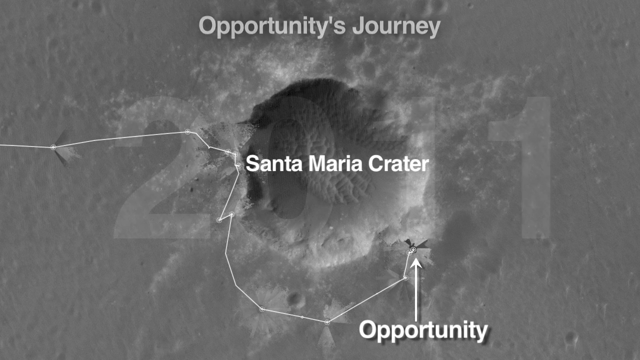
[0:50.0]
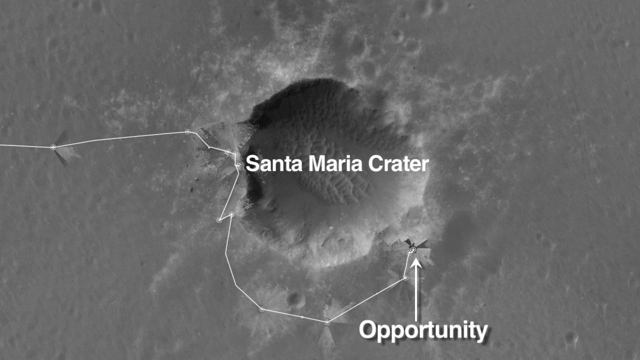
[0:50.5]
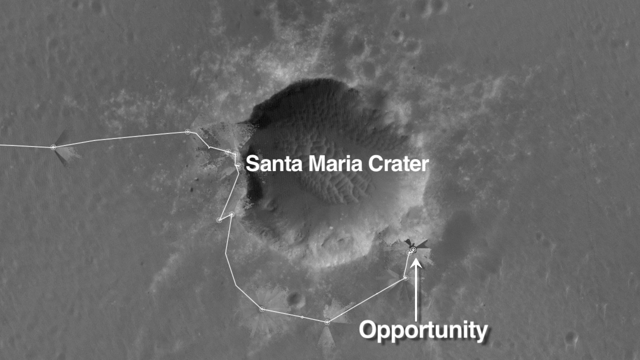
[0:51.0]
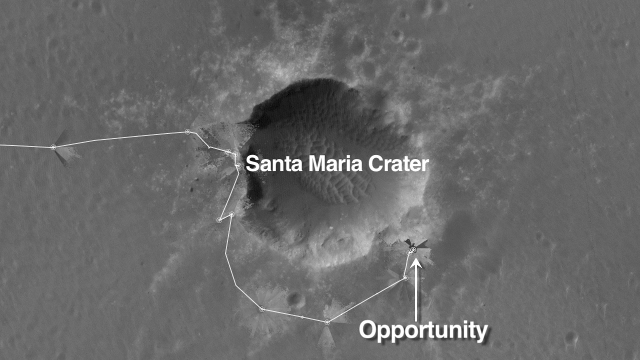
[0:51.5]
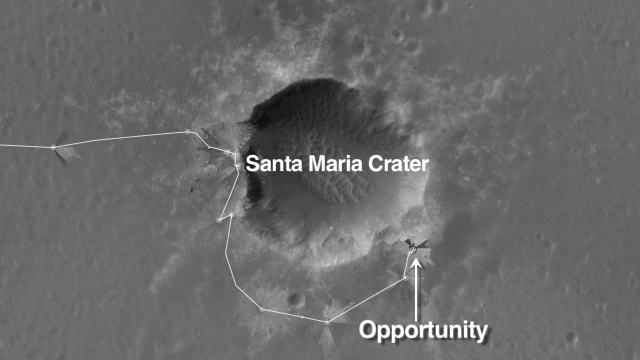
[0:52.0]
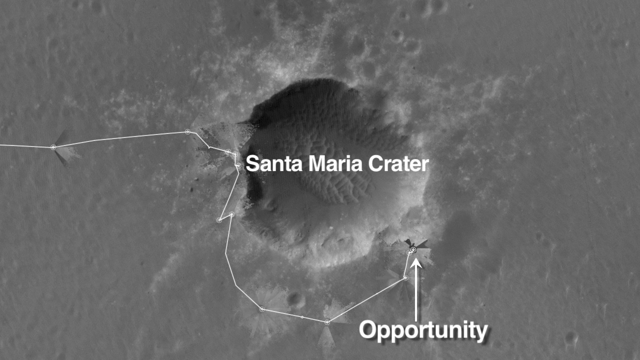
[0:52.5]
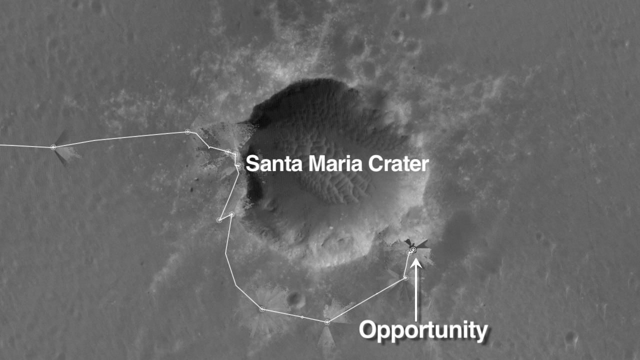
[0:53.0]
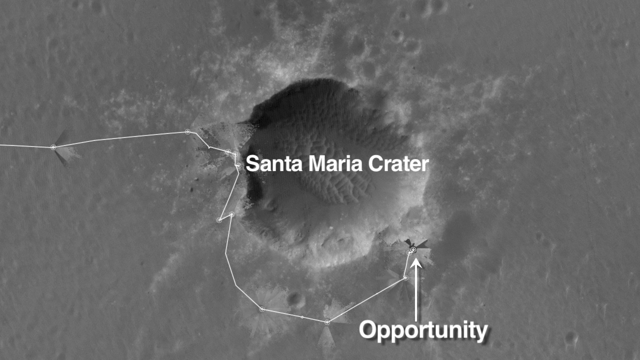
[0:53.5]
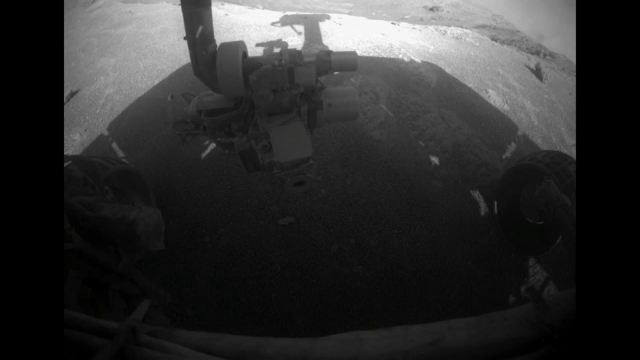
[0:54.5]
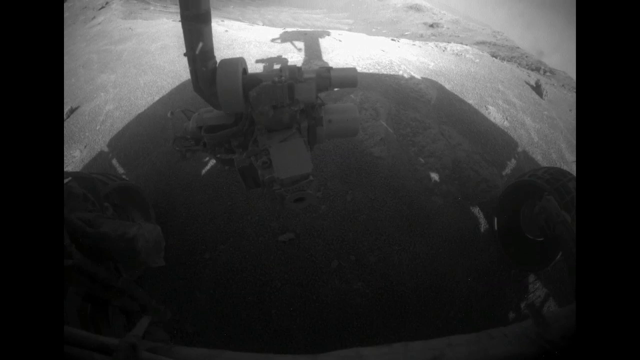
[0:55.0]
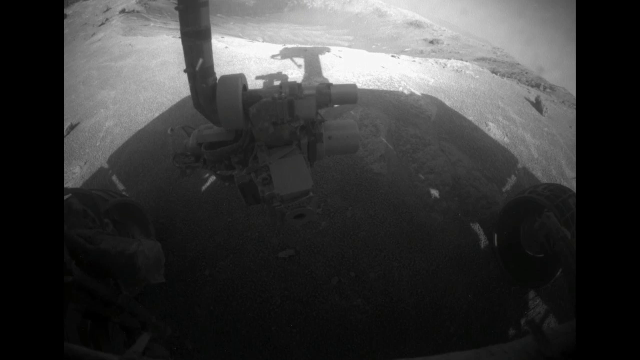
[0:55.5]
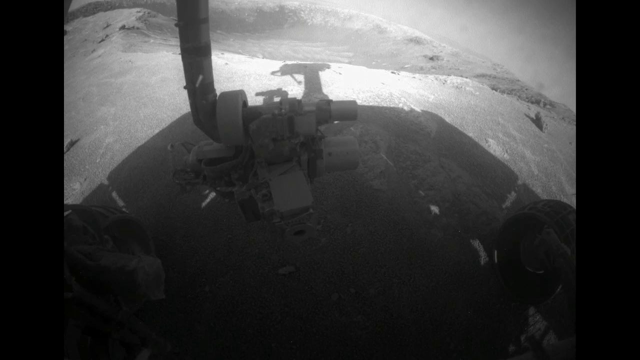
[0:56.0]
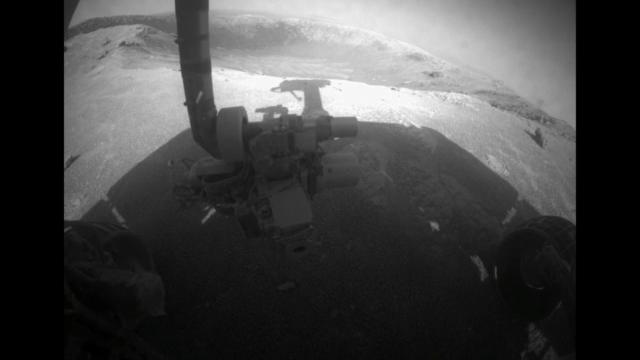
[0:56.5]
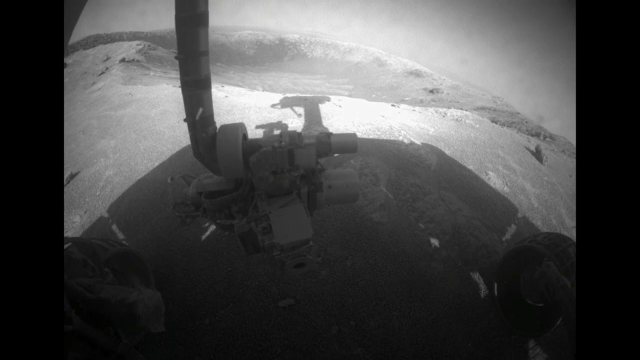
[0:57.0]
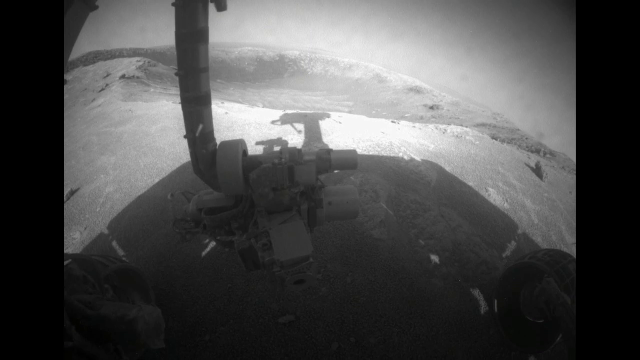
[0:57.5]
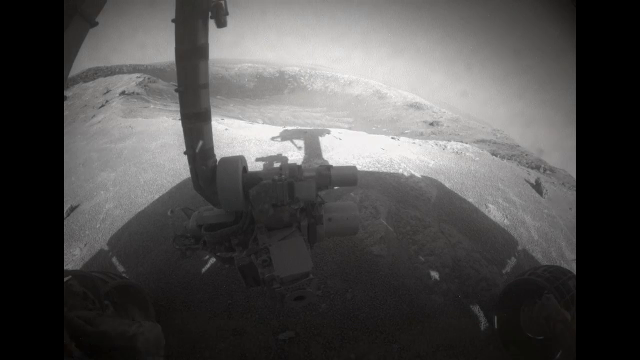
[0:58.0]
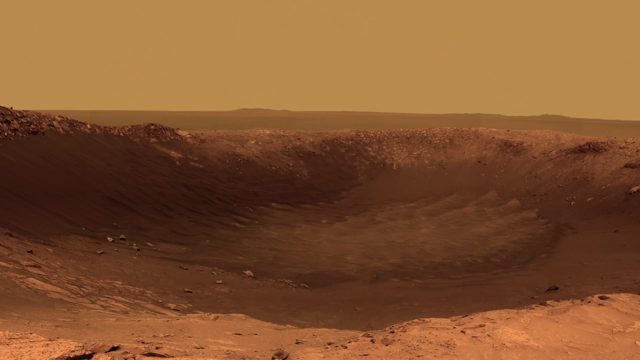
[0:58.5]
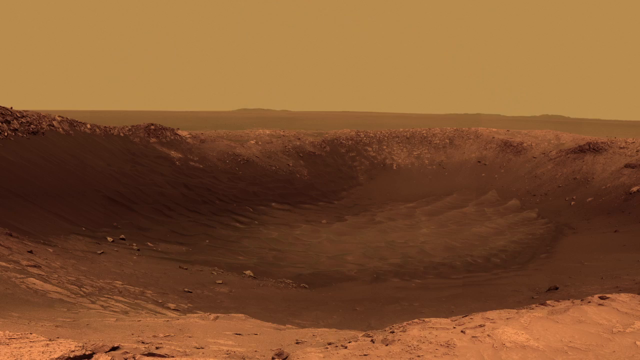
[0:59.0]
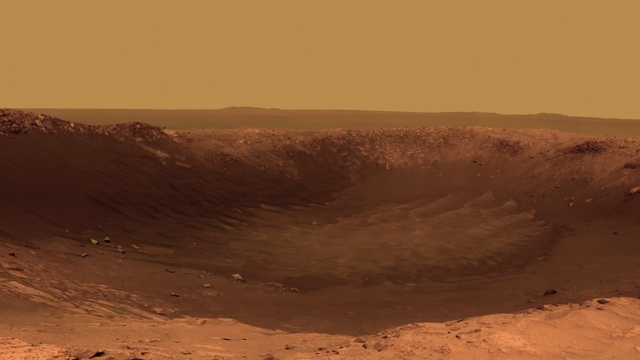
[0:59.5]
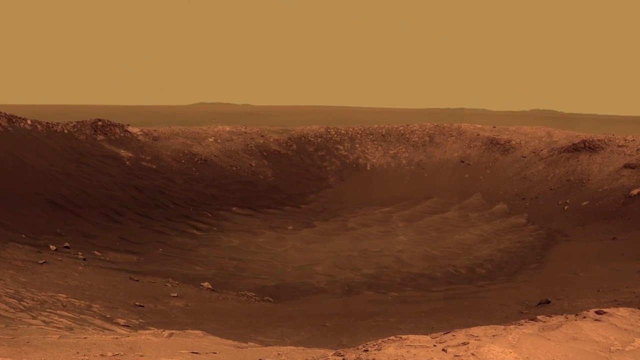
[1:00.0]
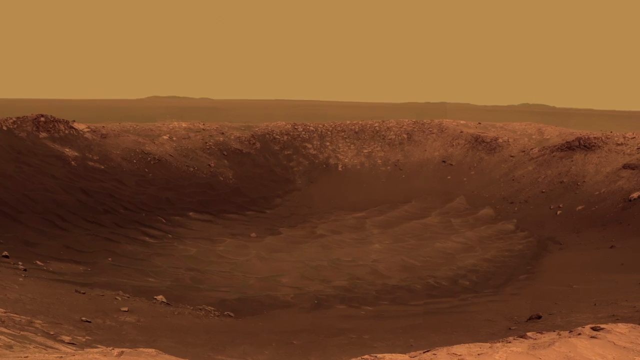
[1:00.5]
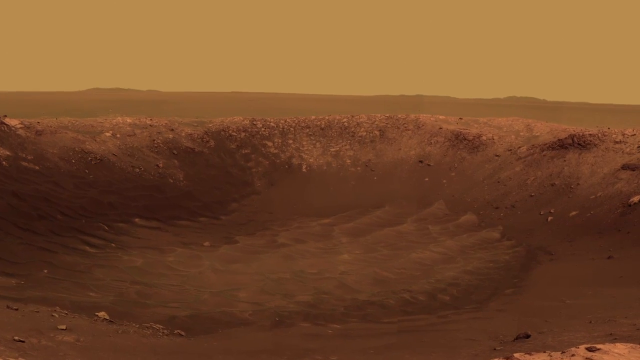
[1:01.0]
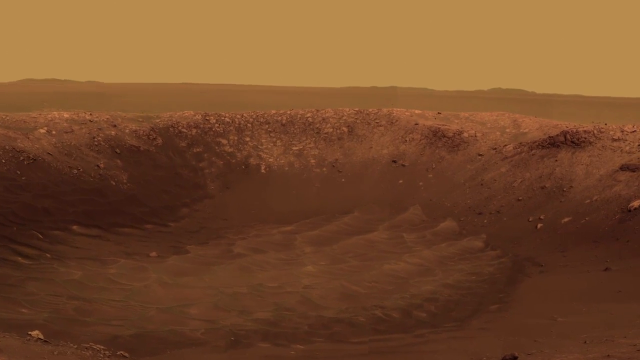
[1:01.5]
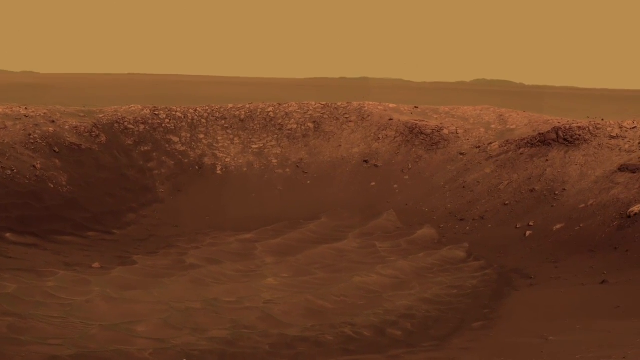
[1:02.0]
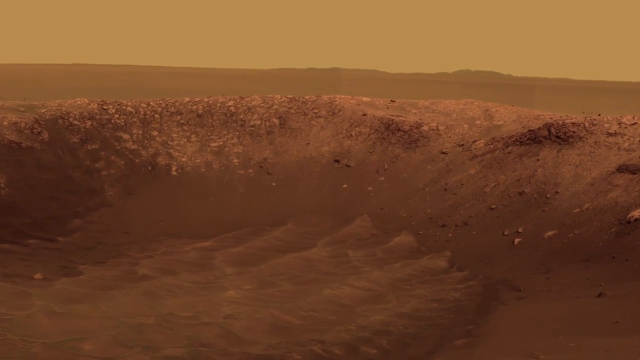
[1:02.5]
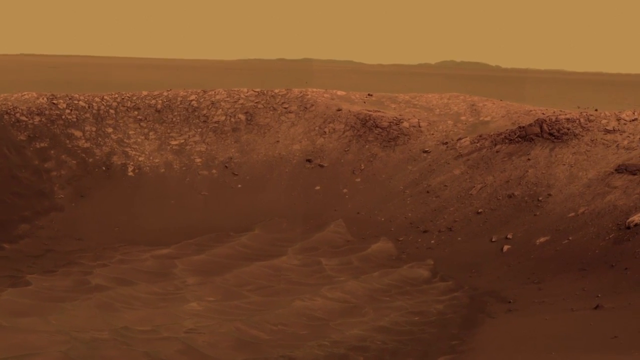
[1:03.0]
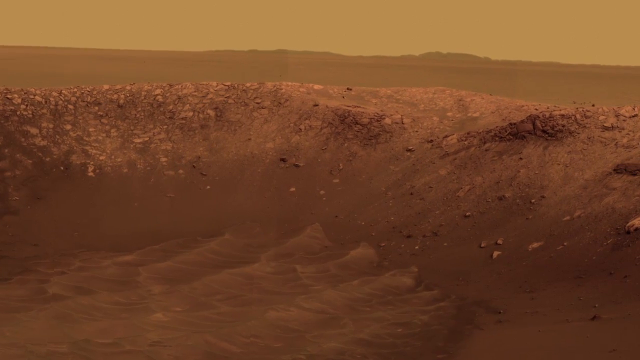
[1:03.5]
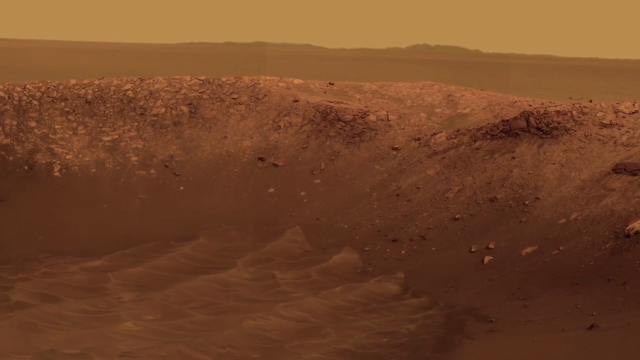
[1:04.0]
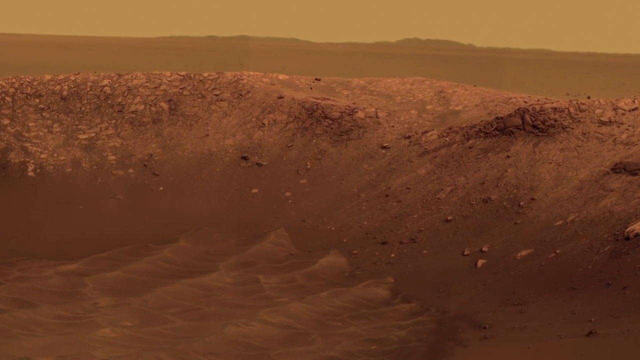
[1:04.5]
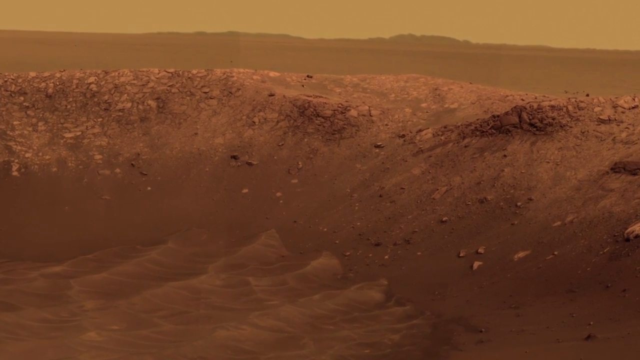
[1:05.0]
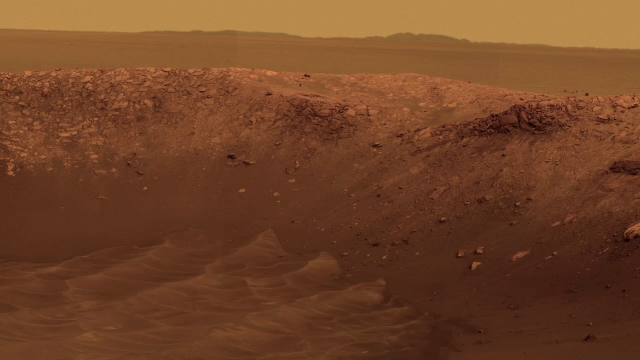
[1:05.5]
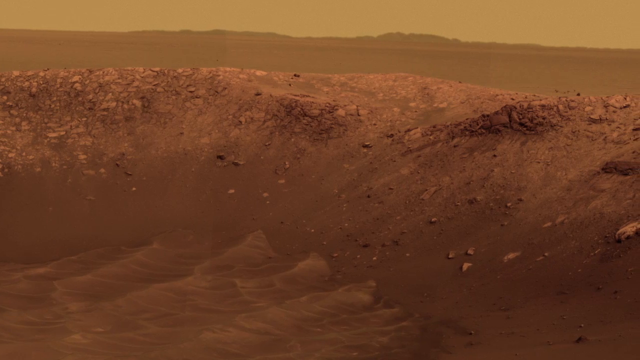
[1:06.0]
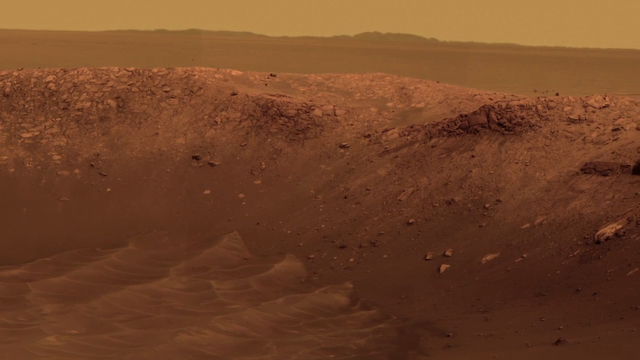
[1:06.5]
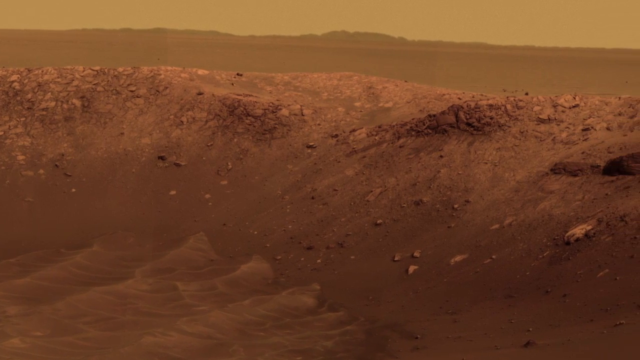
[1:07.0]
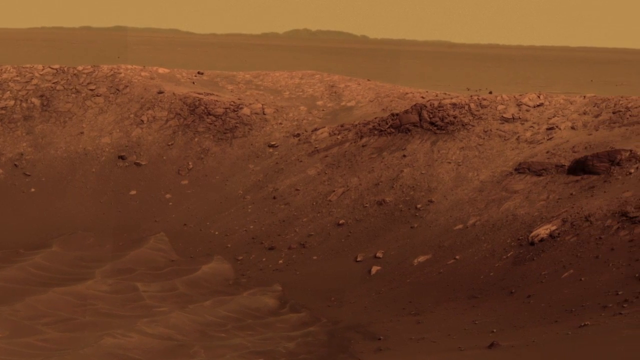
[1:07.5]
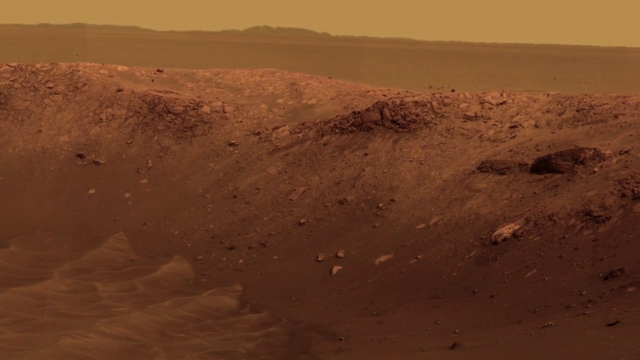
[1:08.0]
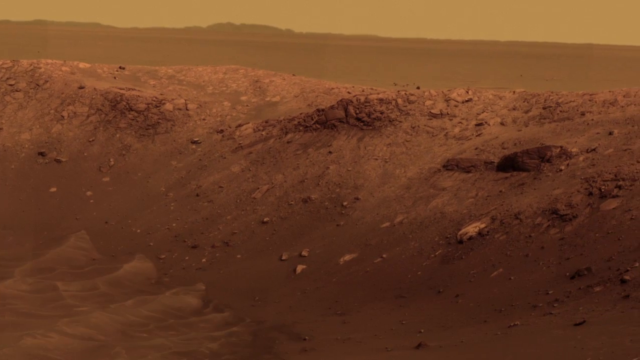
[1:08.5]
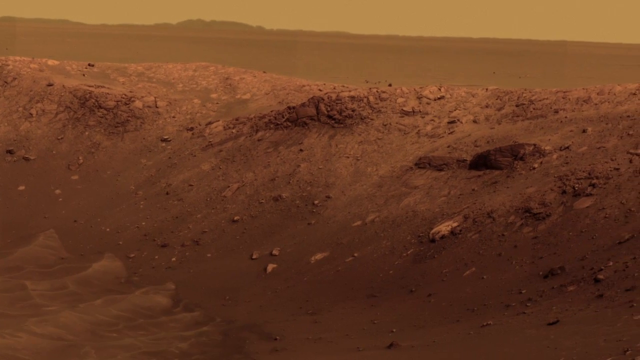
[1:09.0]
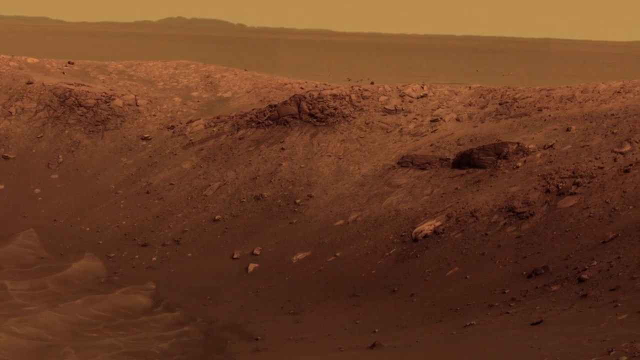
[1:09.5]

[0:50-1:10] The Santa Maria crater remains on screen, with not much happening. The video then transitions to footage in which the camera slowly moves up over some kind of mechanical device. It then transitions to a desolate-looking planet or ground area where it looks like the crater itself is shown; the camera starts to zoom in and slowly move towards the right, getting closer to the details of the crater. Next comes almost a photograph from outer space looking down at the crater, looking as if it could be filmed from a plane, possibly by a camera attached to the plane, looking down at this area of the planet or ground.